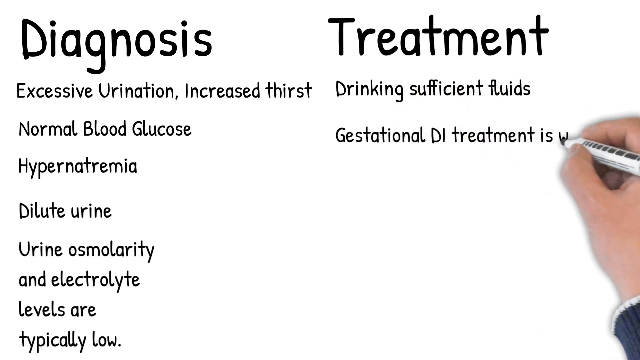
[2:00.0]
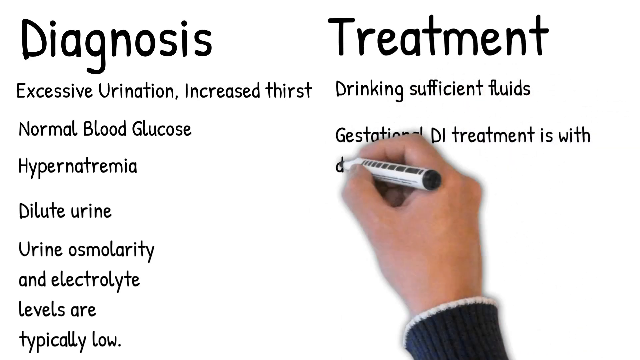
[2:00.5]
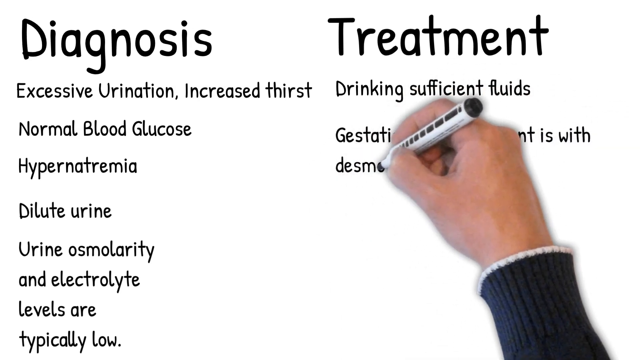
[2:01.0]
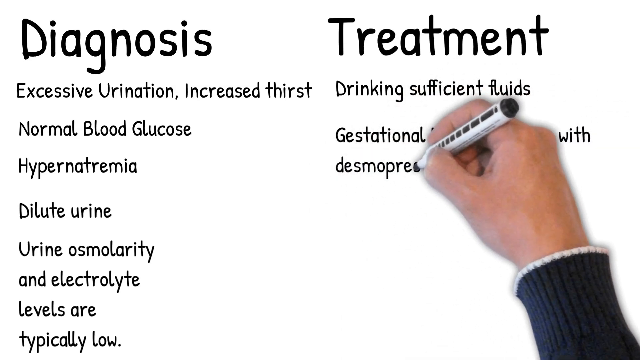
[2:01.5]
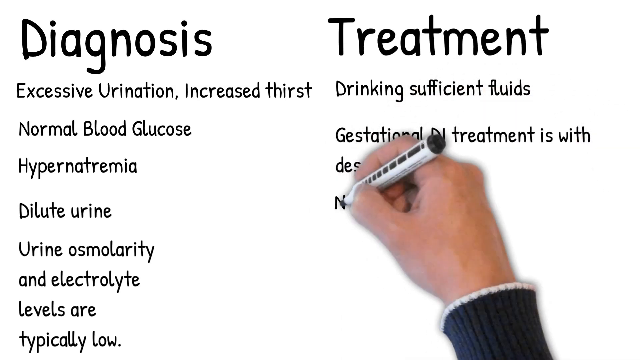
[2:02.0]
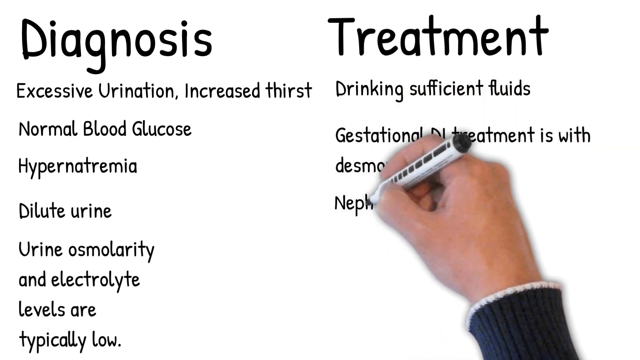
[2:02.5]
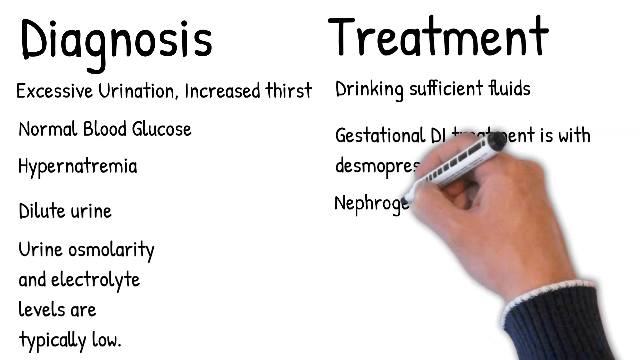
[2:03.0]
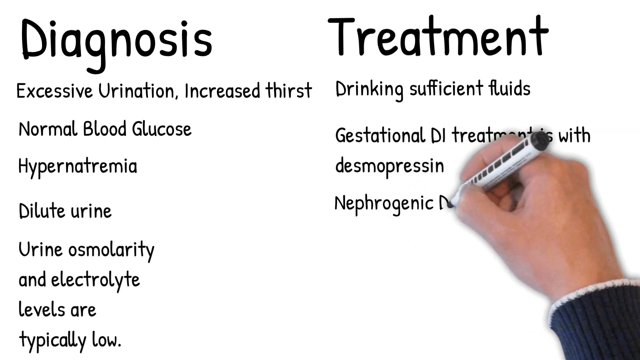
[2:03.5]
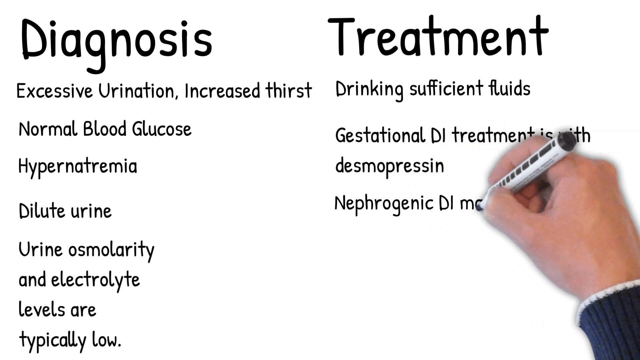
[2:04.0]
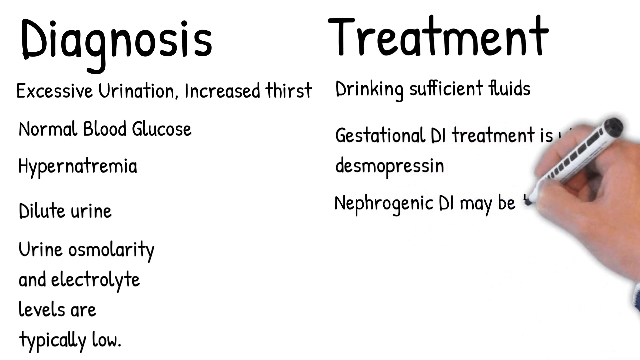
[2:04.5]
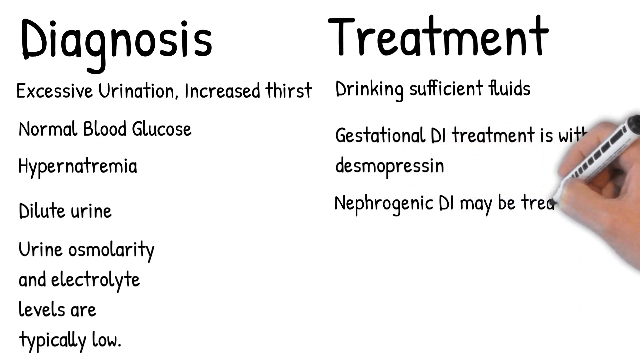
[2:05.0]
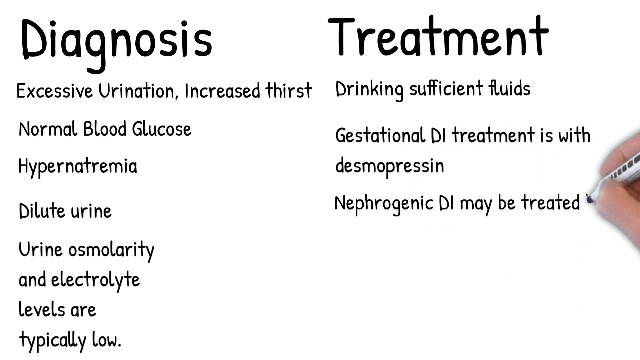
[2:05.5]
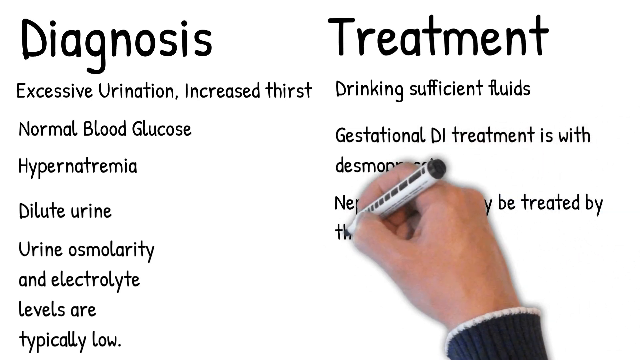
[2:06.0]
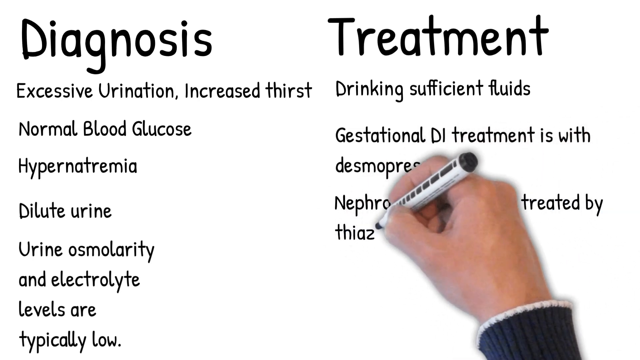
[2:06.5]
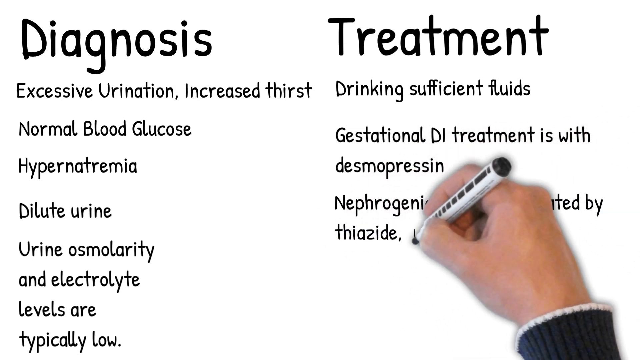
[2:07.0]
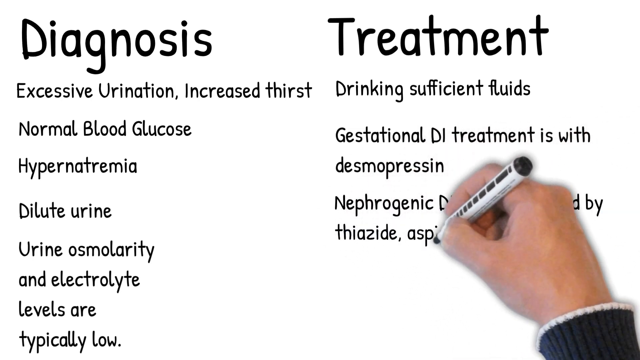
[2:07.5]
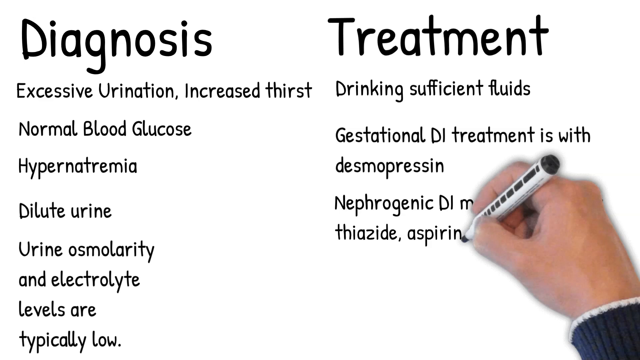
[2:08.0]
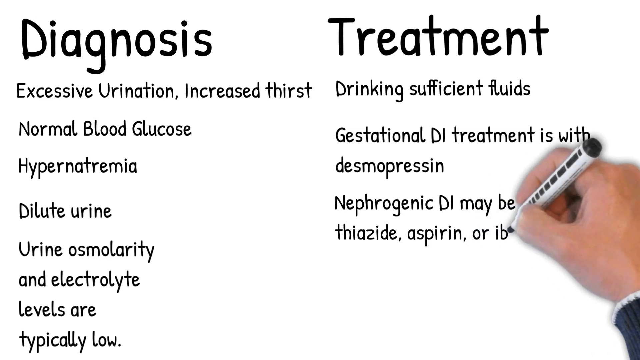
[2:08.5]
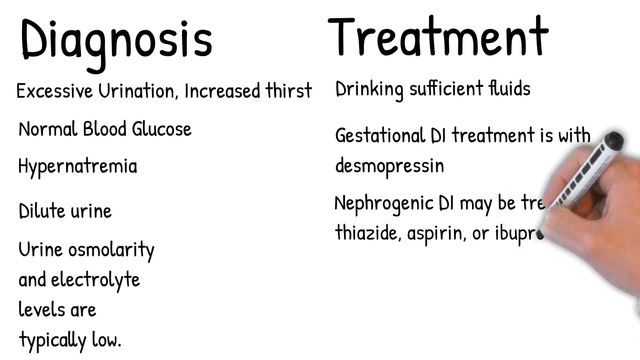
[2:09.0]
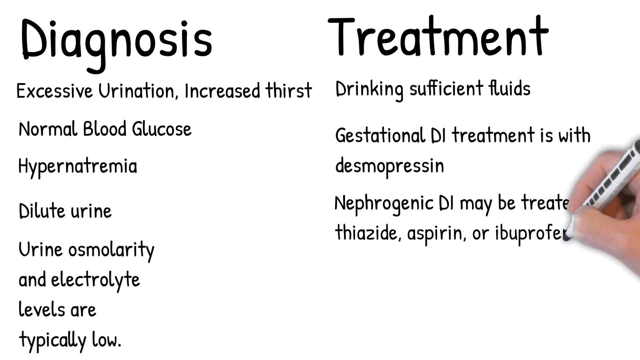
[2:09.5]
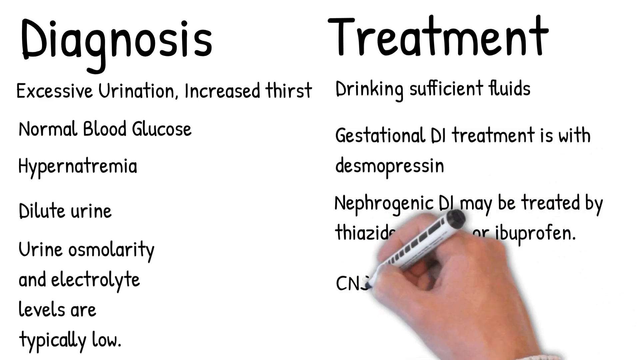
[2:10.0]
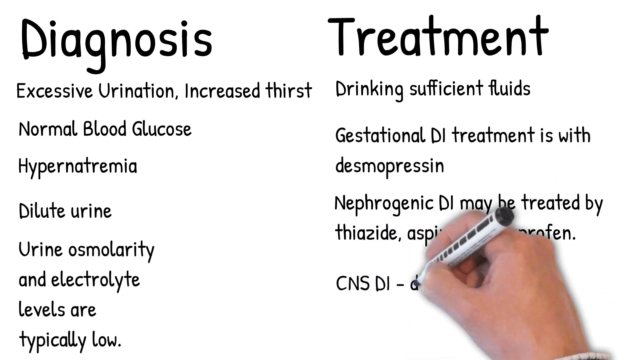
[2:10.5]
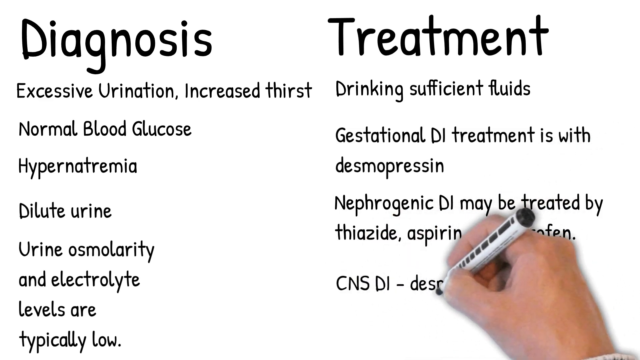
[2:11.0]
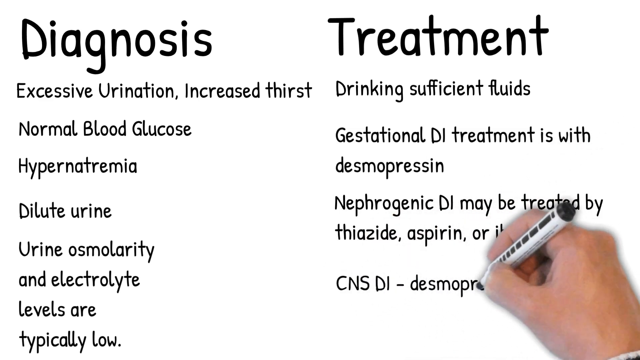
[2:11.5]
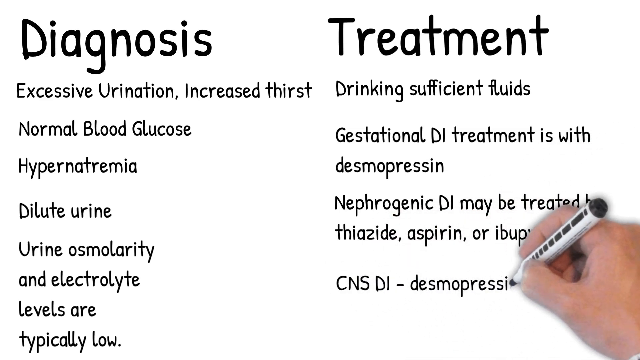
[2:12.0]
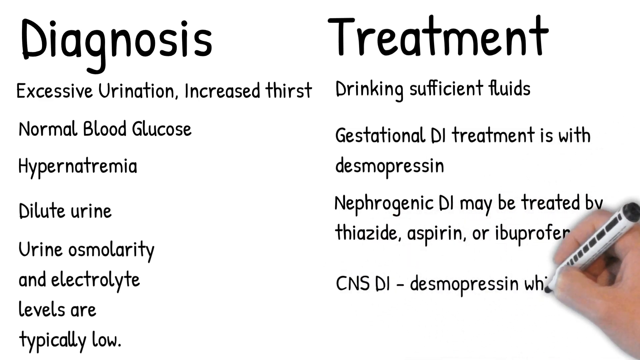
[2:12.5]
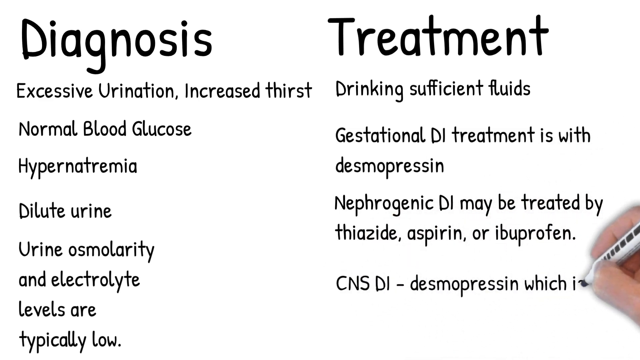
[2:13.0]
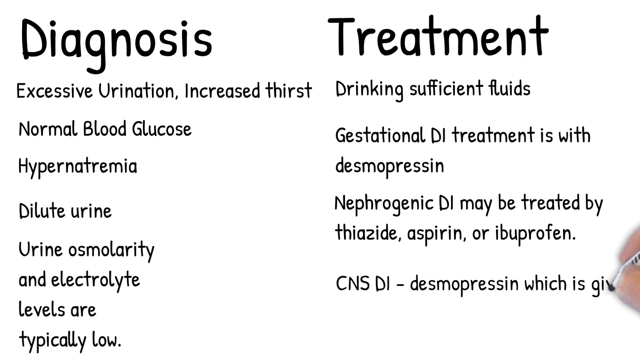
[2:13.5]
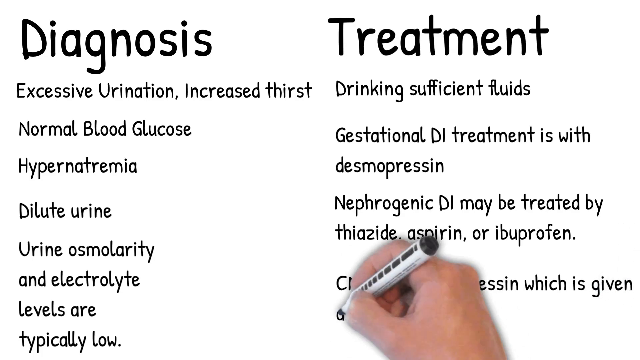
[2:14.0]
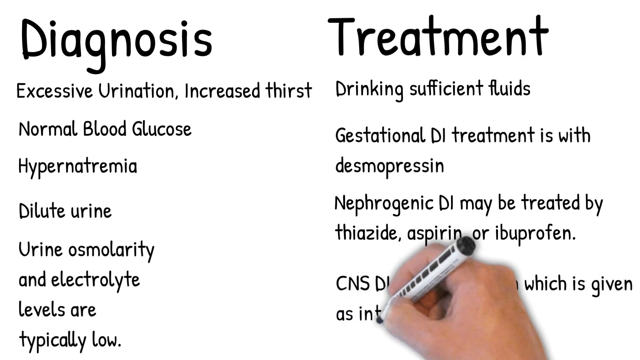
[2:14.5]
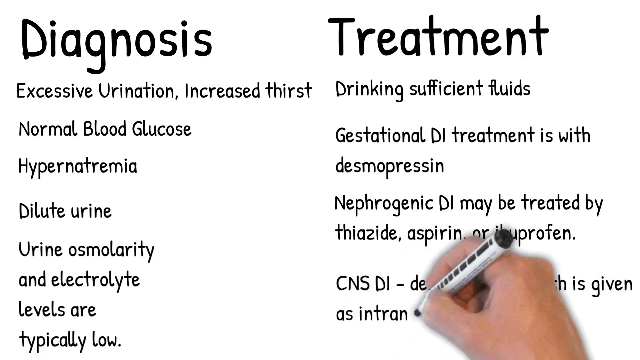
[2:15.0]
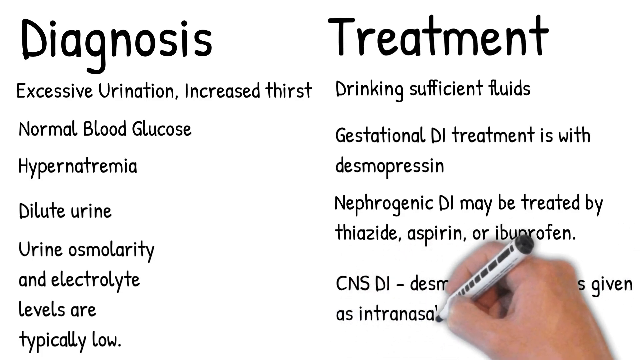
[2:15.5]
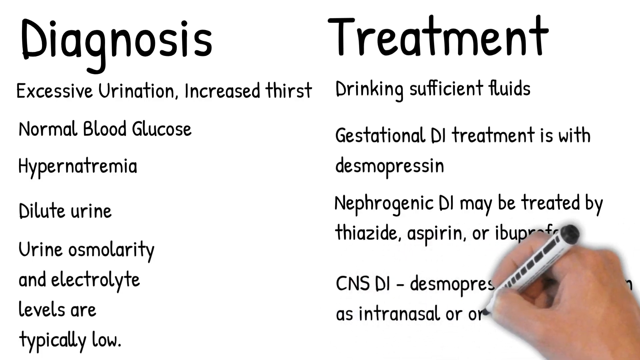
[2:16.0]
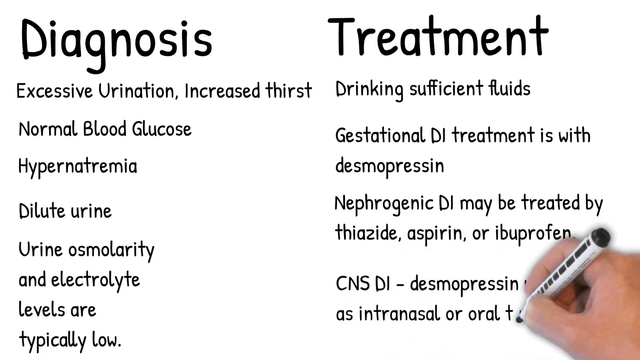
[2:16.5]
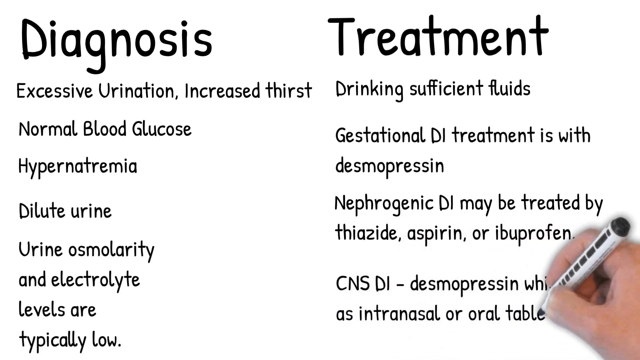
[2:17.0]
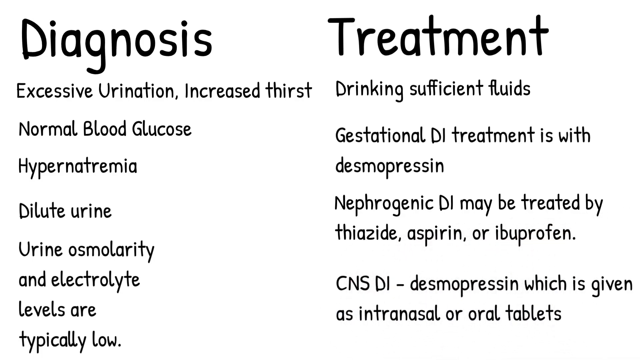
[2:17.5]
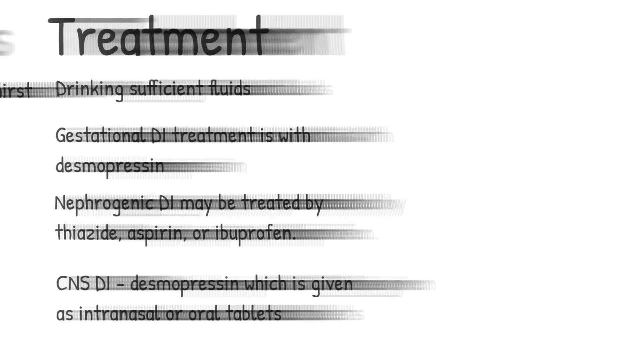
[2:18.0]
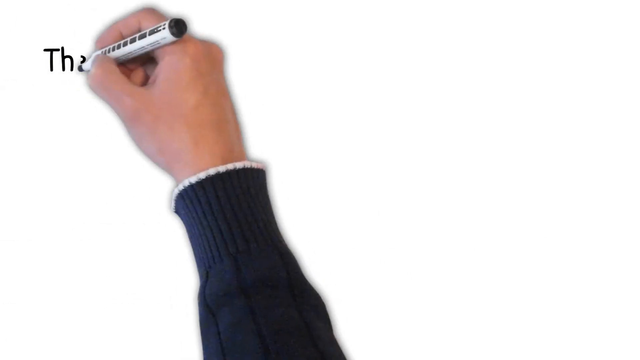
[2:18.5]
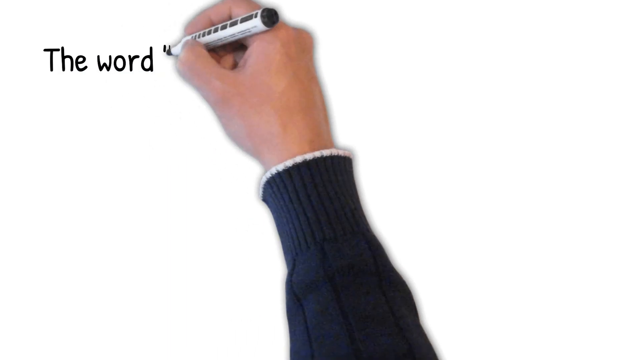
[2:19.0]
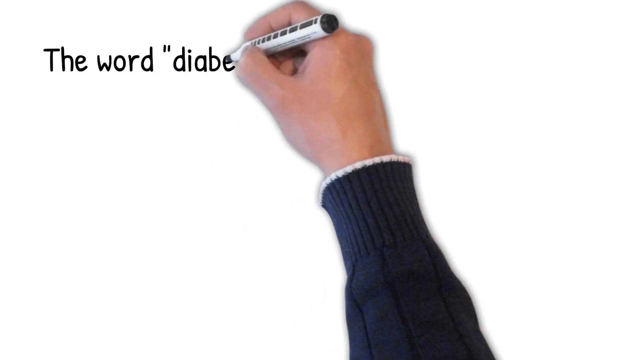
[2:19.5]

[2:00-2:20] The hand finishes writing out the treatment. On the left-hand side is "diagnosis" in large black letters, with the diagnoses listed underneath, such as excessive urination, increased thirst, normal blood glucose, hypernatremia, dilute urine, osmolarity, and electrolyte levels are typically low. On the right is "treatment" with the treatment options listed, such as "drinking sufficient fluids," "gestational DI treatment is with desmopressin," "nephrogenic DI may be treated with thiazide, aspirin, or ibuprofen," and "CNS DI desmopressin, which is given as intranasal or oral tablets." The screen then changes to the next slide, and for a few seconds the hand starts a new list beginning with the word "diabetes," written in the same font and just as quickly.